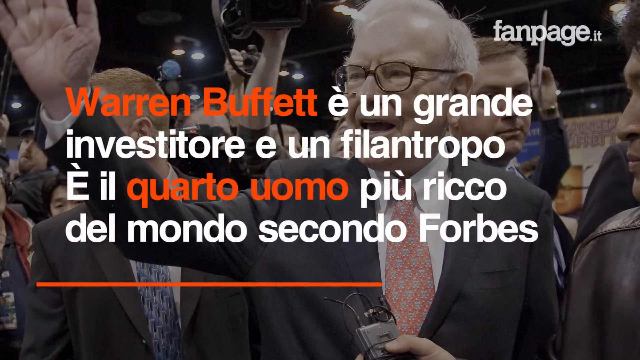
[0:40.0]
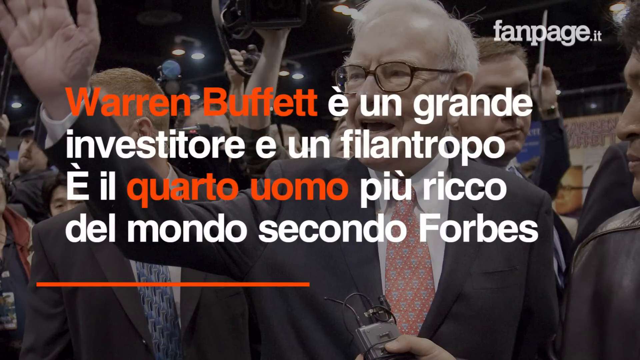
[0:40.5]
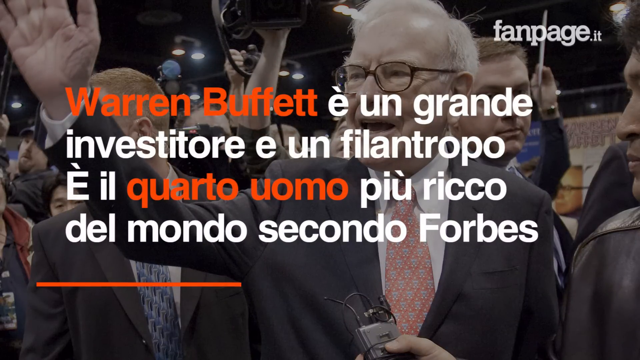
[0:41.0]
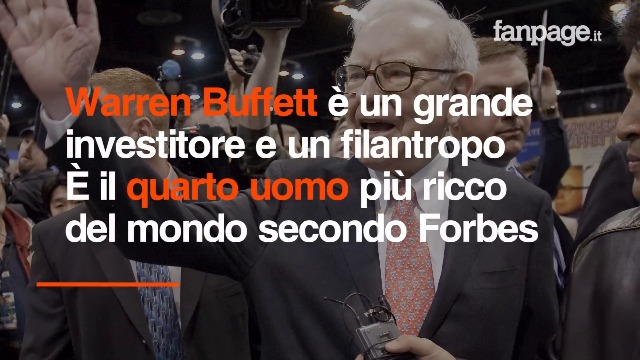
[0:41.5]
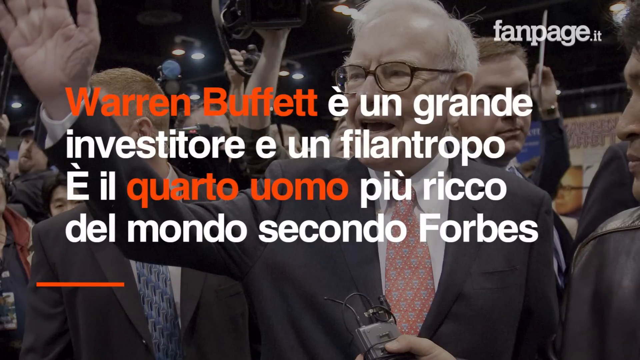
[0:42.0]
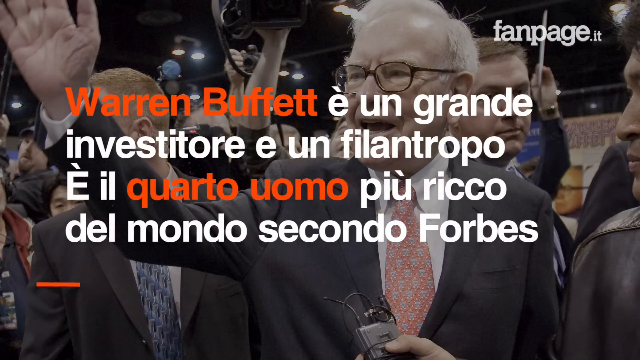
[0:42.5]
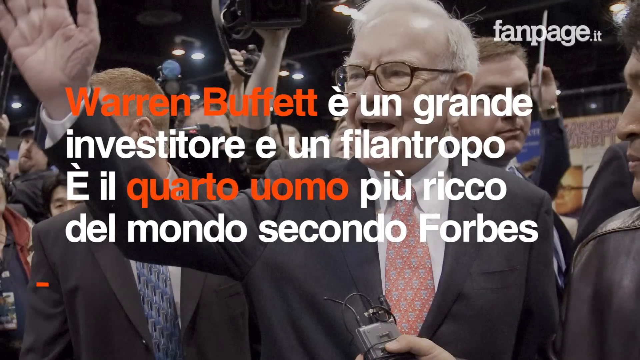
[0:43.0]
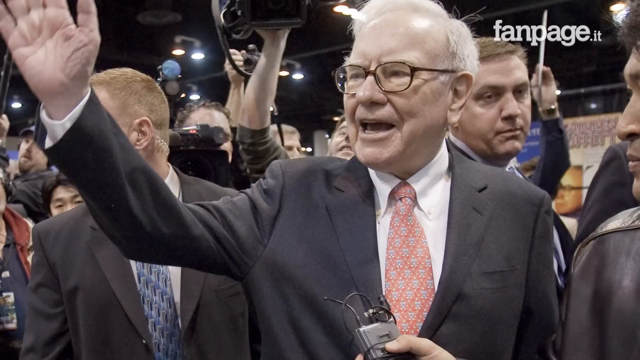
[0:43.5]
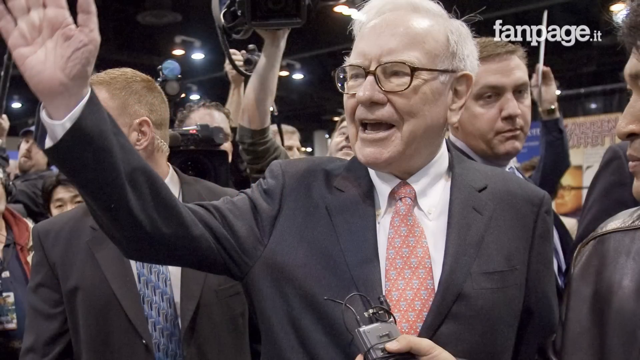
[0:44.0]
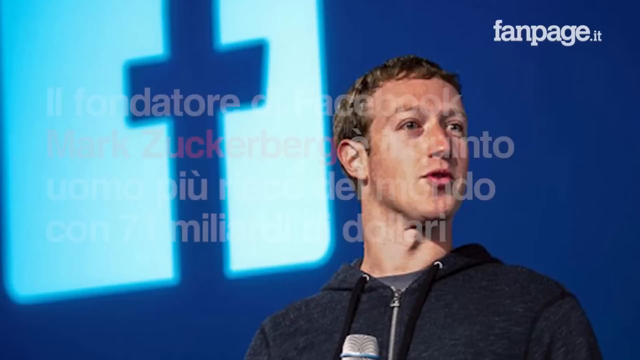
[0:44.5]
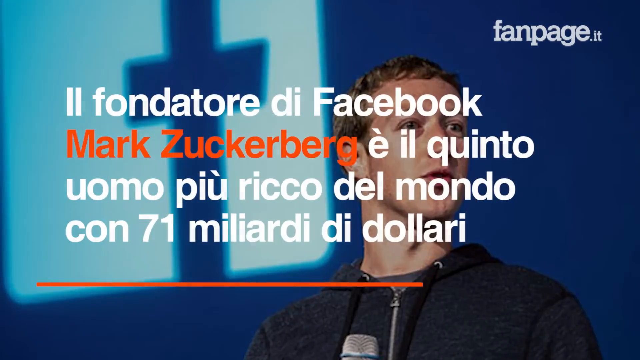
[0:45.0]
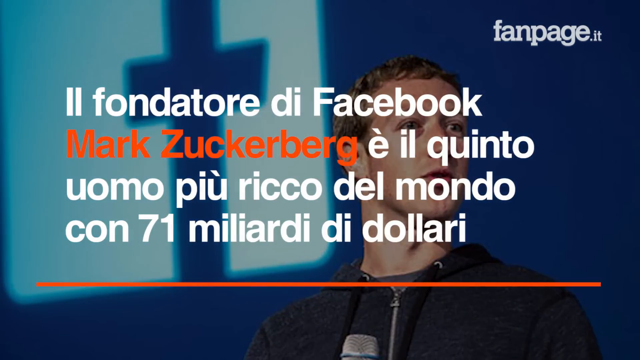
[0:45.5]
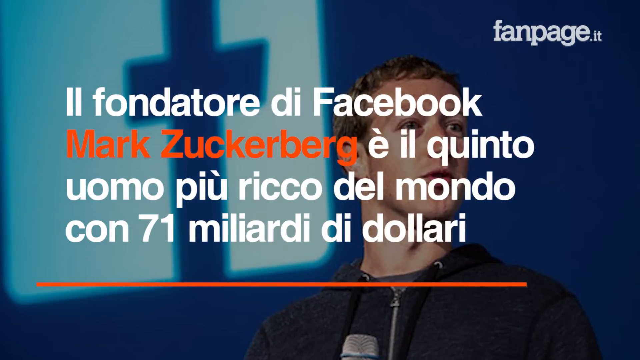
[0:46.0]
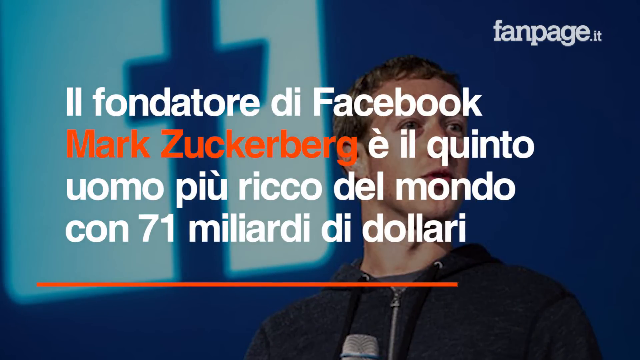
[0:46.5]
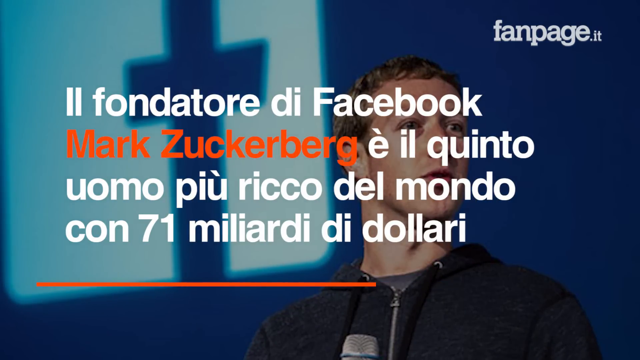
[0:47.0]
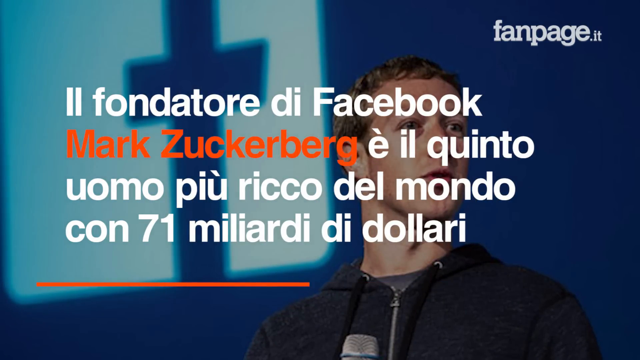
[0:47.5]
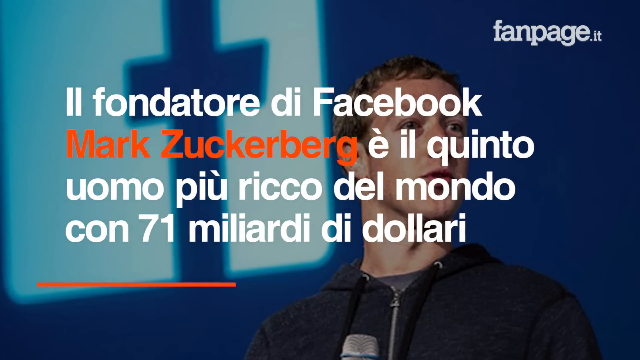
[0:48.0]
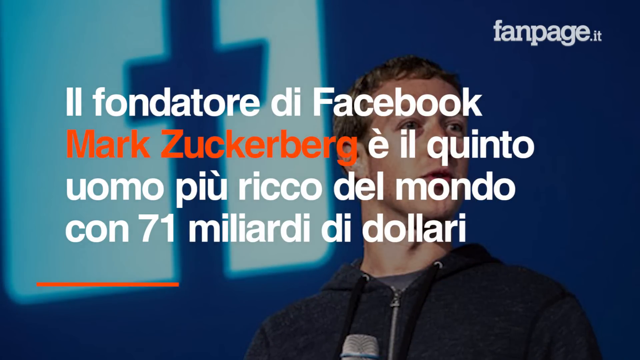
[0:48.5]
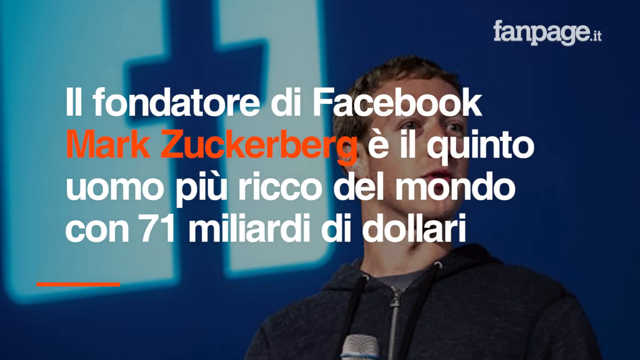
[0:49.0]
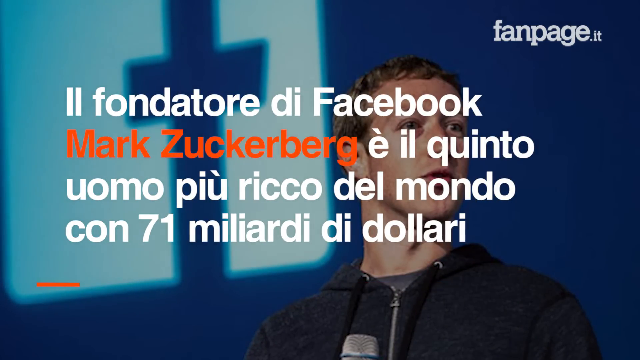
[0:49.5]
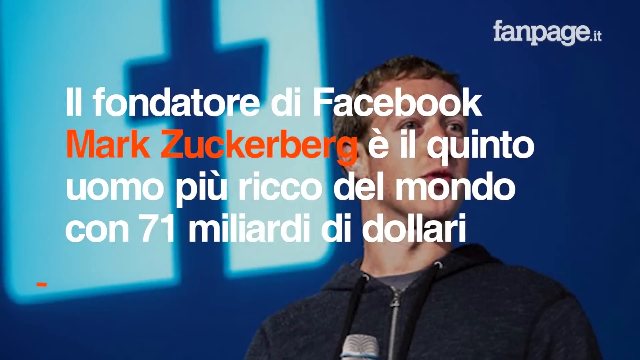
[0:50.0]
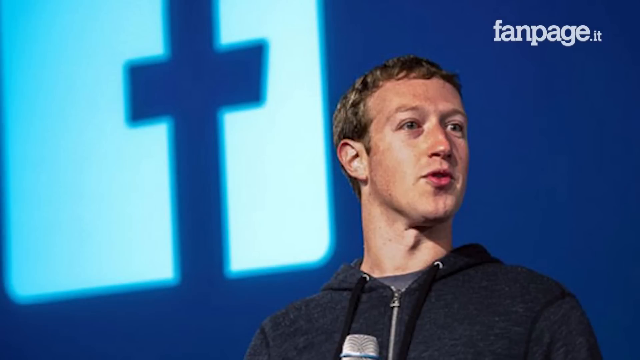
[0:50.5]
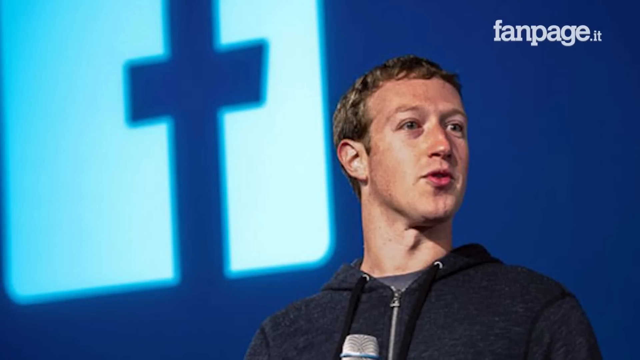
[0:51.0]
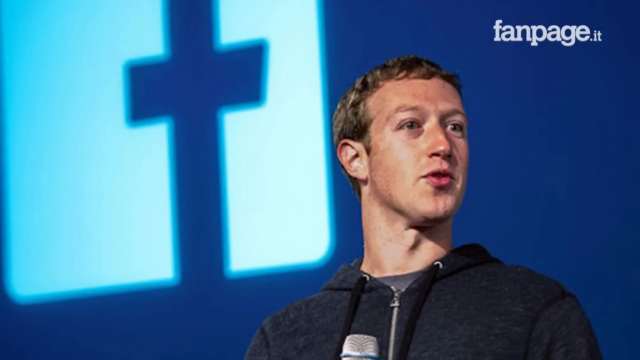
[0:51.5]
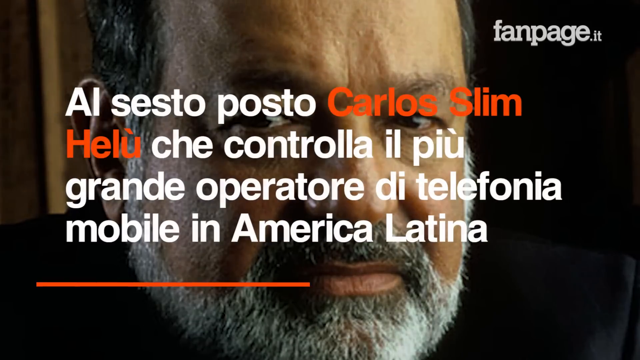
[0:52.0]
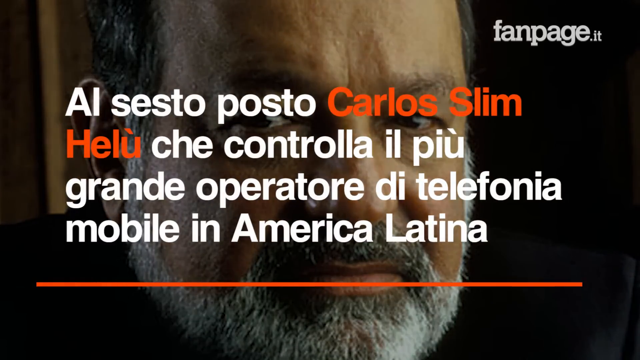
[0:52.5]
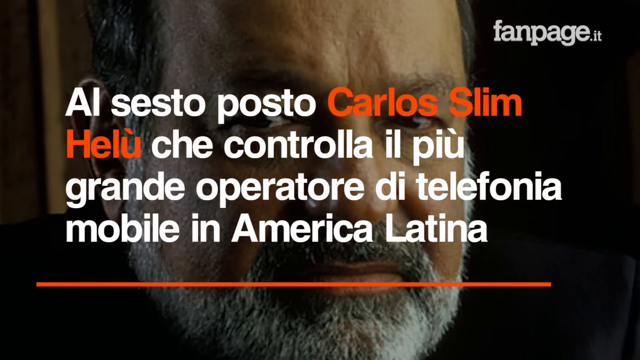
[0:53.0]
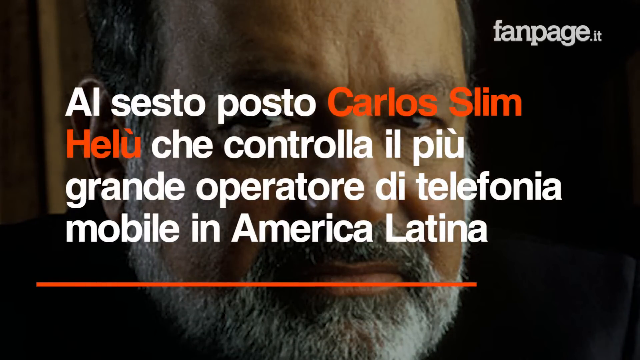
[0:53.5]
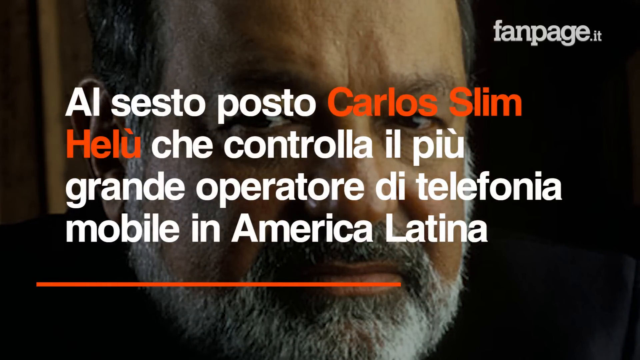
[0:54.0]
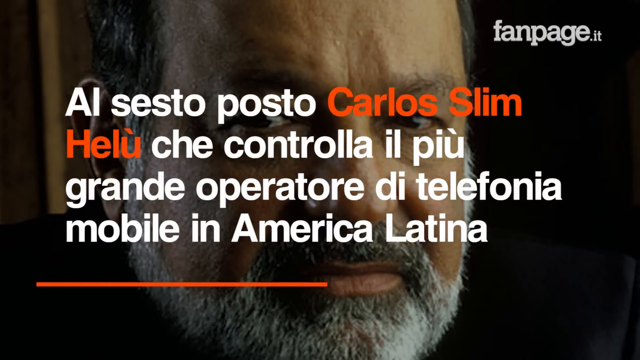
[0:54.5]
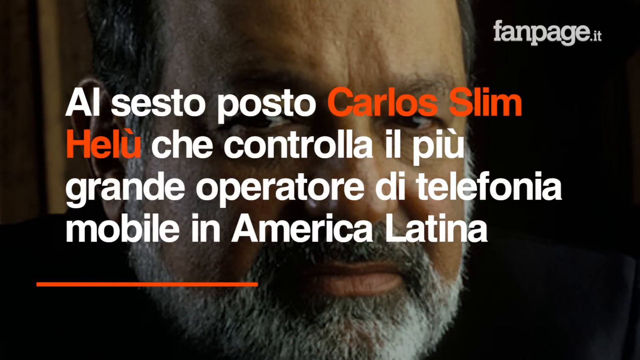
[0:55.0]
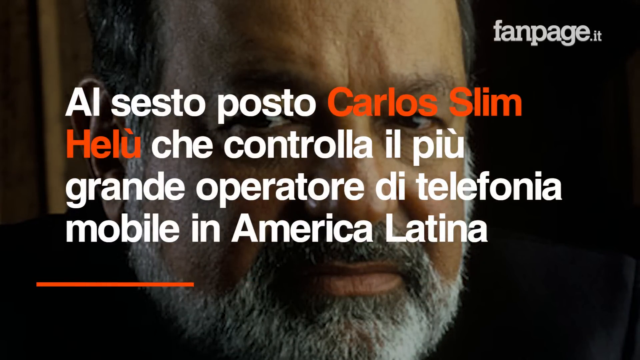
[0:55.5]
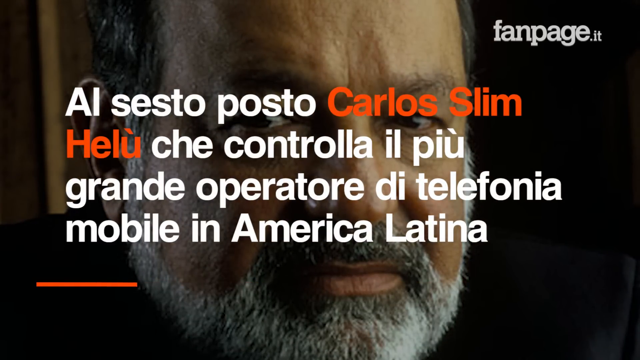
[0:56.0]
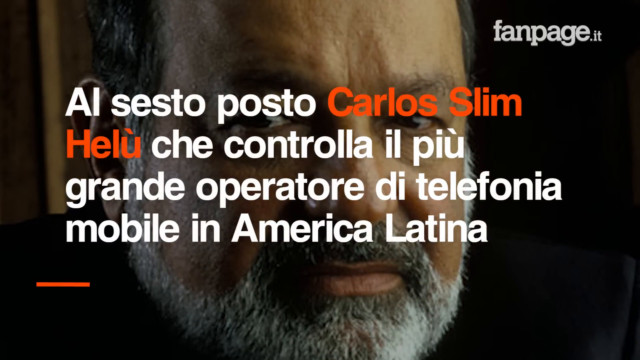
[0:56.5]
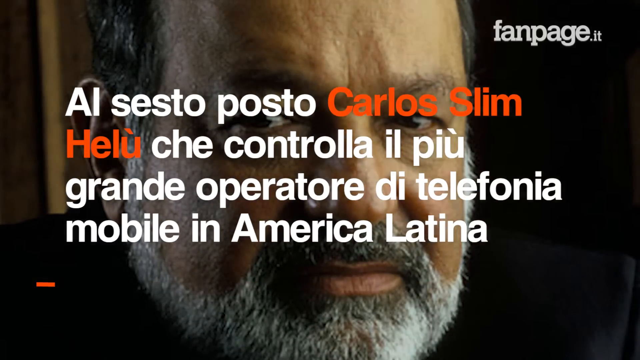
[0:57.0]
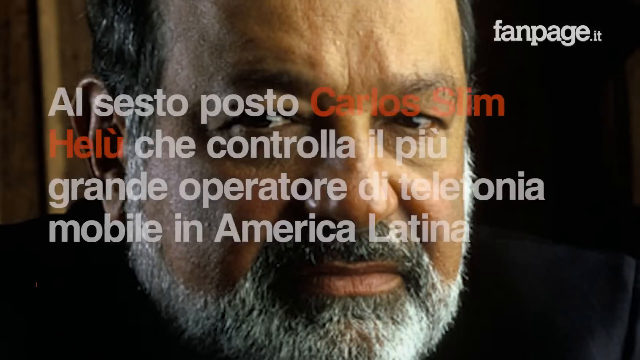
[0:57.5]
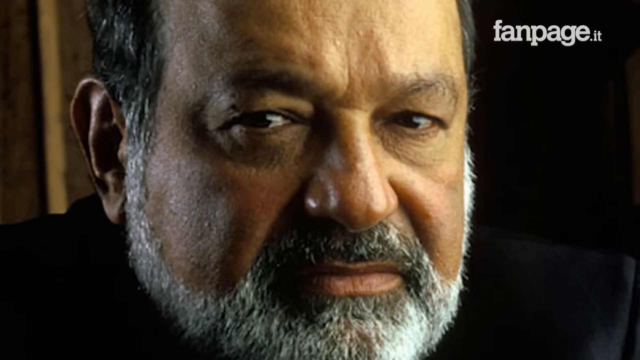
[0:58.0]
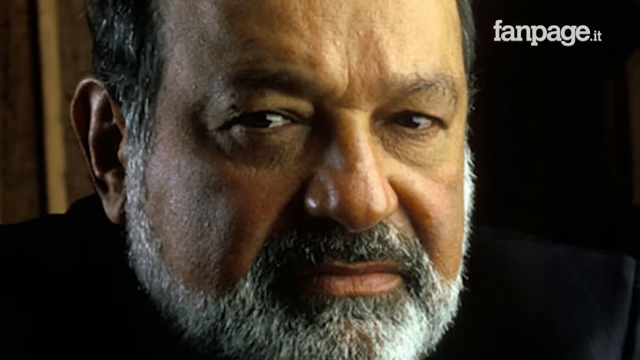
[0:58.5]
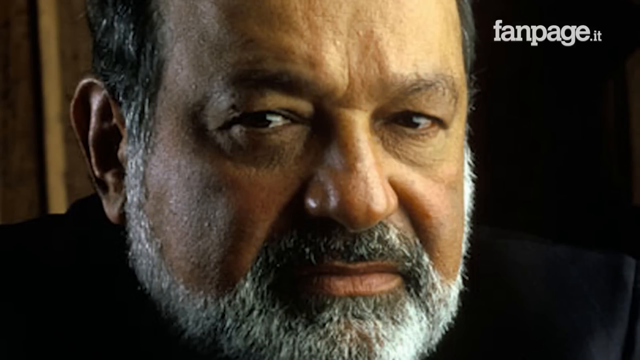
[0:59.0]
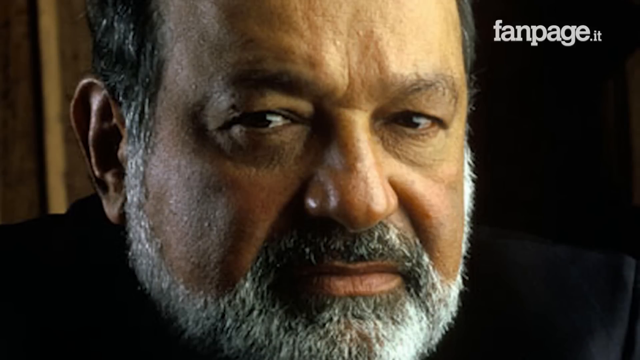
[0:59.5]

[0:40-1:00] The Warren Buffett image continues: he wears a white shirt, a dark sports coat and an orange, blue and white tie. Some people walk around, including what looks like heavy security, and fans. Next comes Mark Zuckerberg, just right of center, with a short haircut and a clean-shaven face, looking off to the right. A Facebook logo takes up most of the left side, with a dark blue border behind him. White text runs across the screen, except for his name. A bar underneath moves until it reaches the left side, then goes off screen. His mouth is slightly open. The video then shows a man named Carlos Slim Helu, up close, with a gray beard and black mustache, looking at the camera, quite tan. White text in bold lettering runs across the screen against a black background. He looks straight ahead, but only his left ear is visible because his head is turned slightly, and the image cuts off about midway up his forehead. A little of his dark hair is visible, with a smattering of gray on the sides.